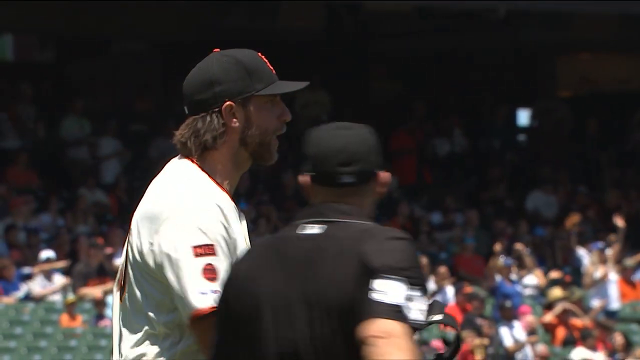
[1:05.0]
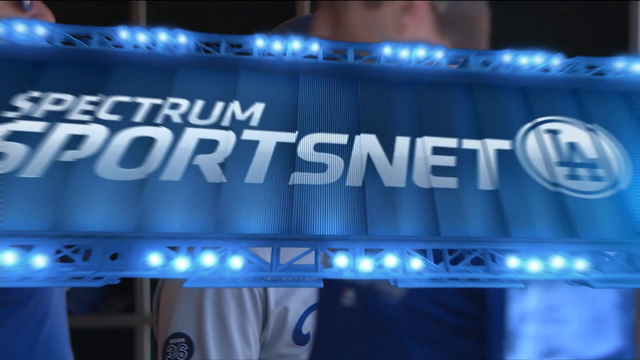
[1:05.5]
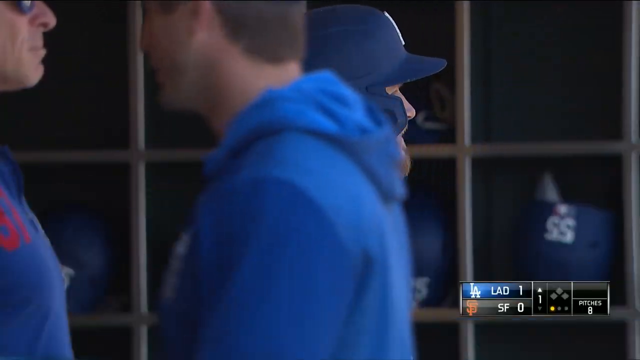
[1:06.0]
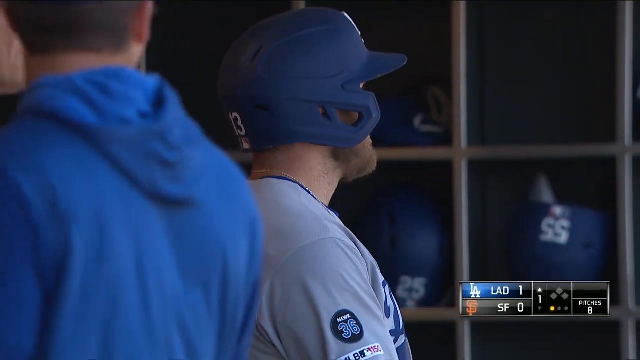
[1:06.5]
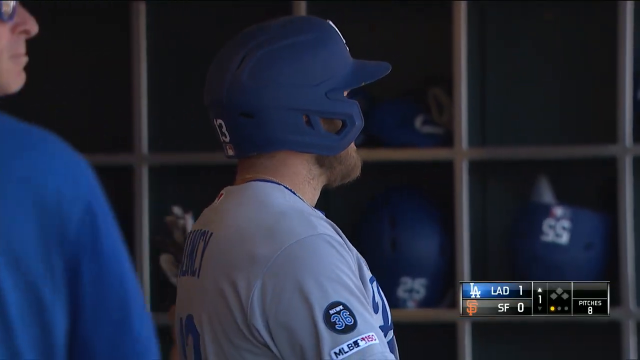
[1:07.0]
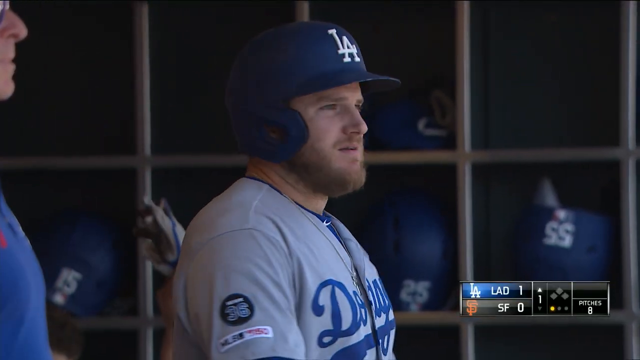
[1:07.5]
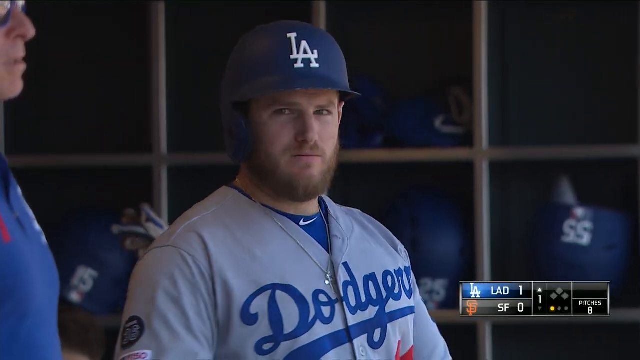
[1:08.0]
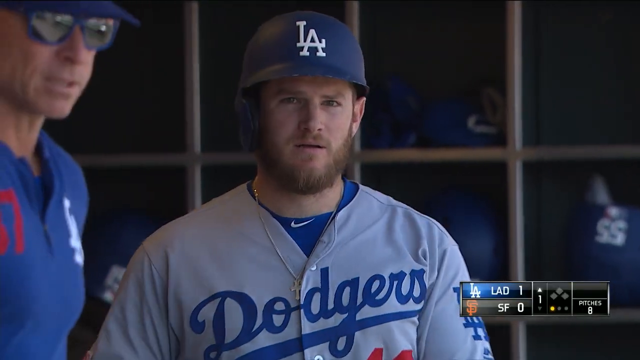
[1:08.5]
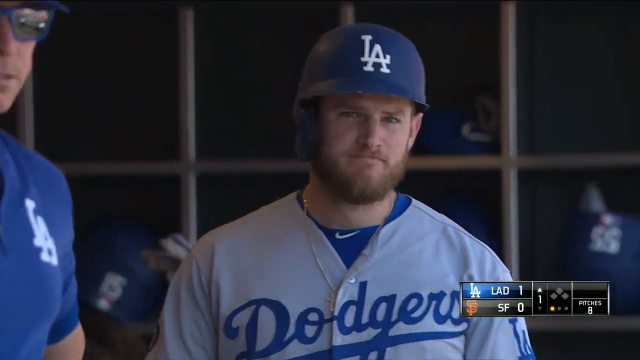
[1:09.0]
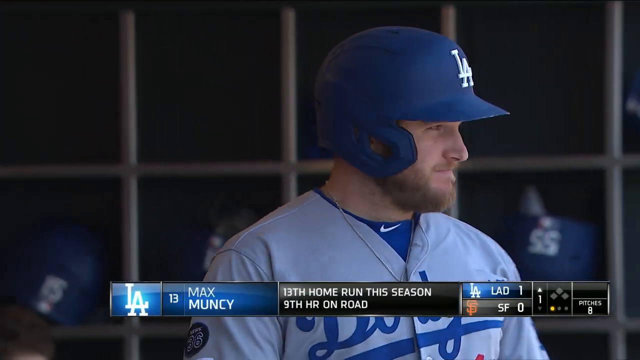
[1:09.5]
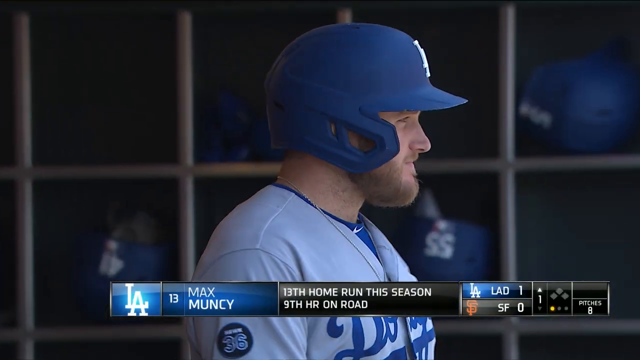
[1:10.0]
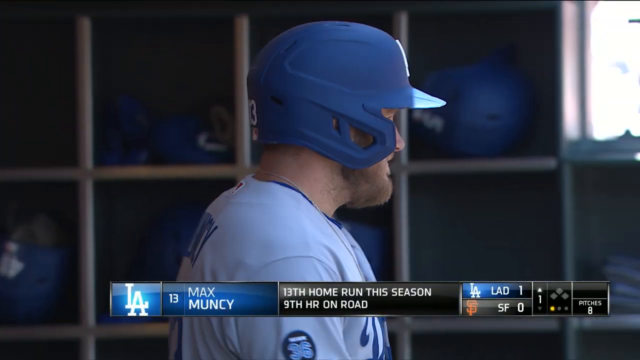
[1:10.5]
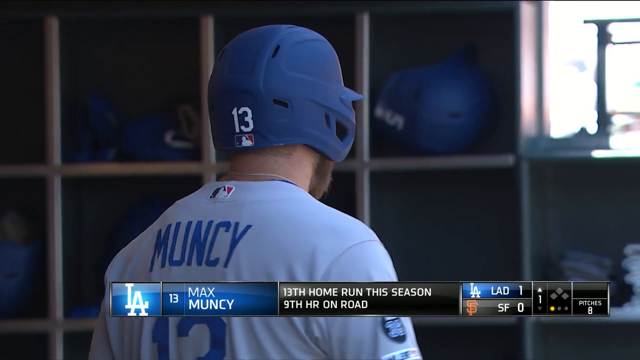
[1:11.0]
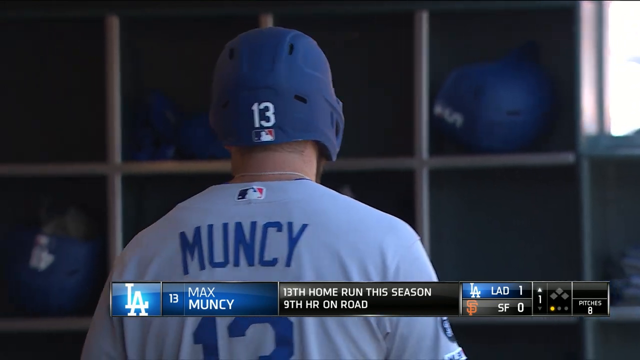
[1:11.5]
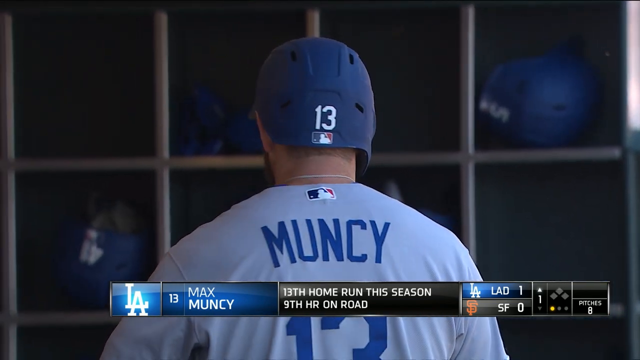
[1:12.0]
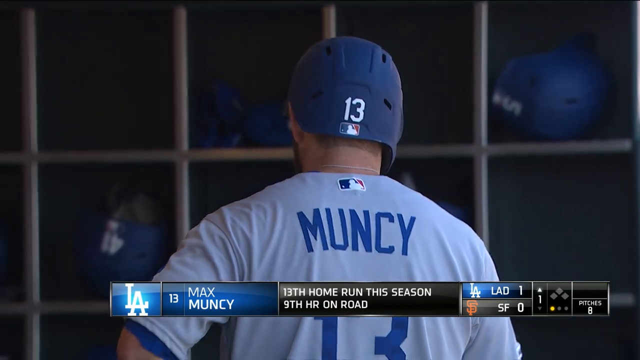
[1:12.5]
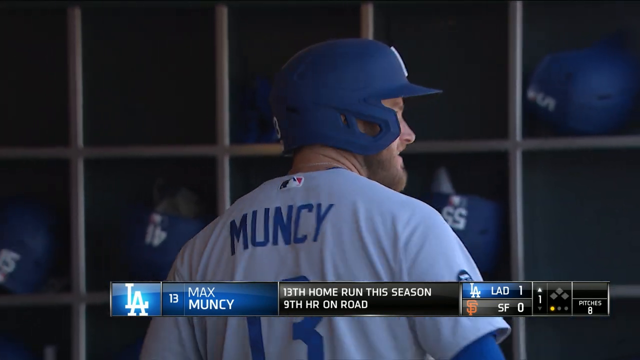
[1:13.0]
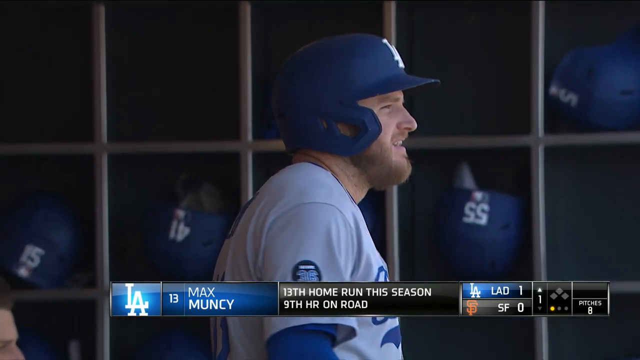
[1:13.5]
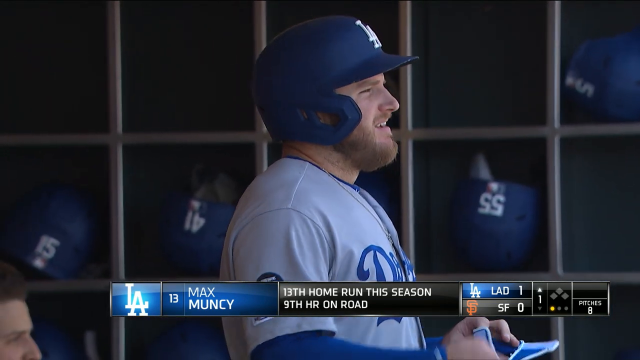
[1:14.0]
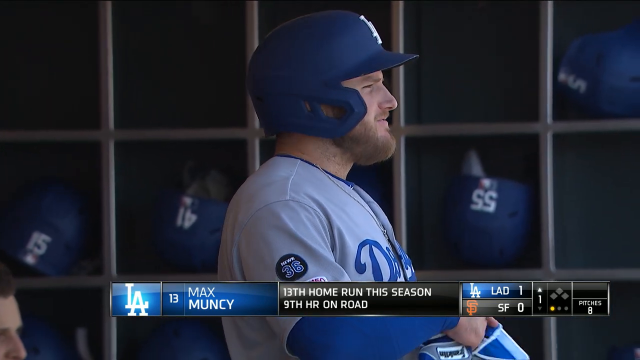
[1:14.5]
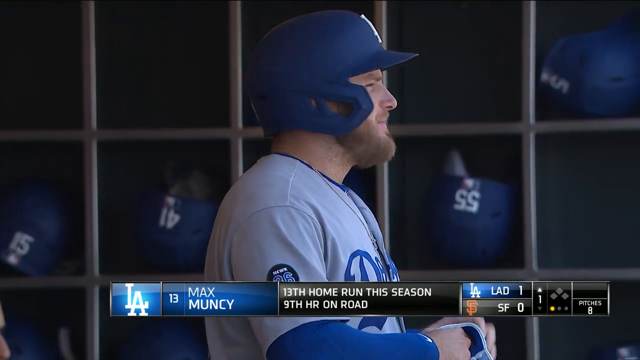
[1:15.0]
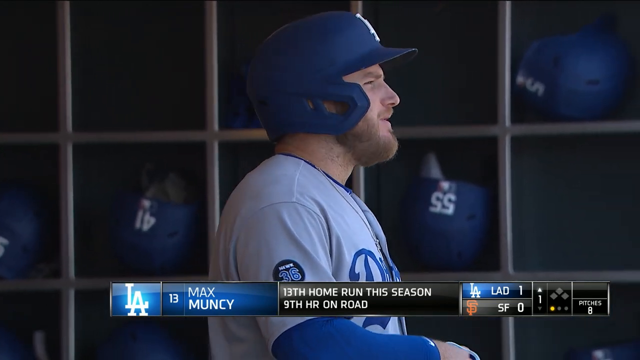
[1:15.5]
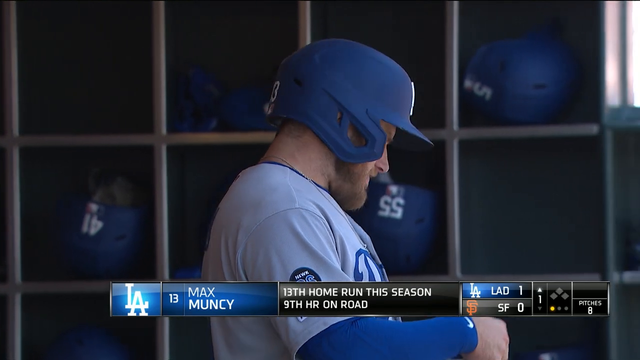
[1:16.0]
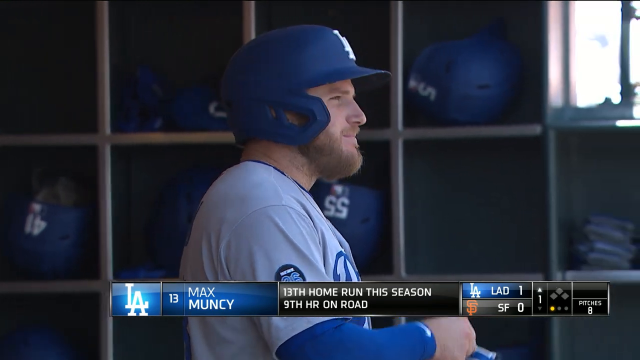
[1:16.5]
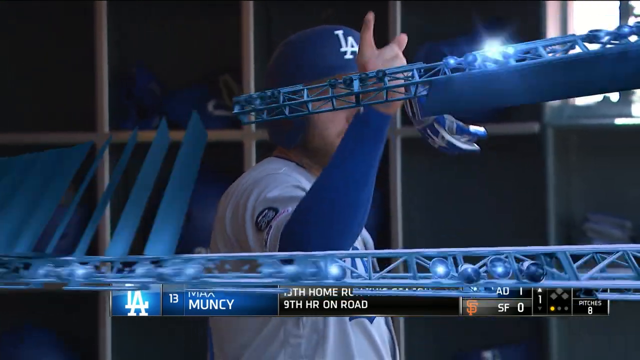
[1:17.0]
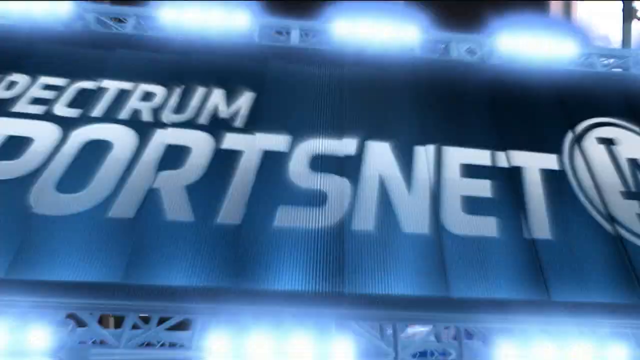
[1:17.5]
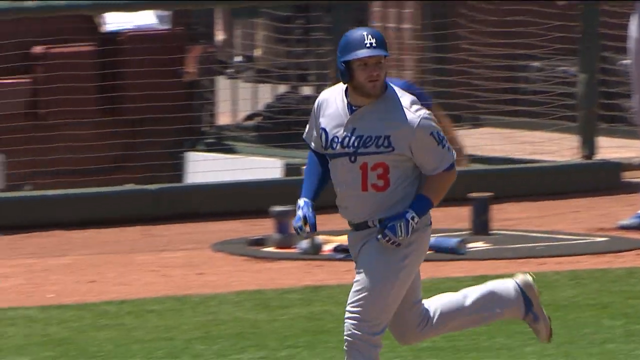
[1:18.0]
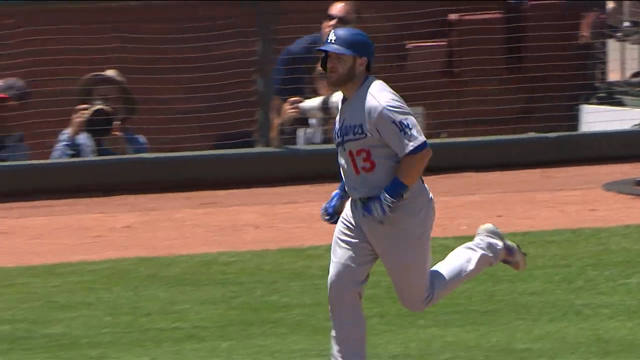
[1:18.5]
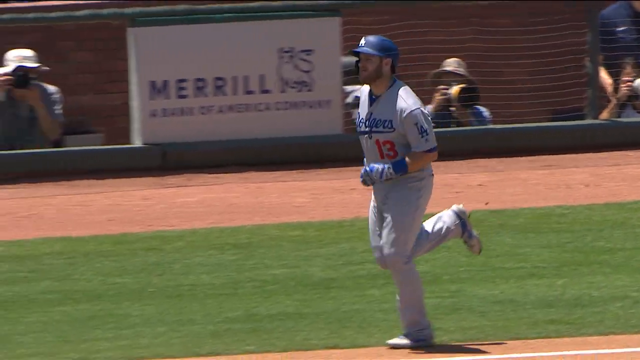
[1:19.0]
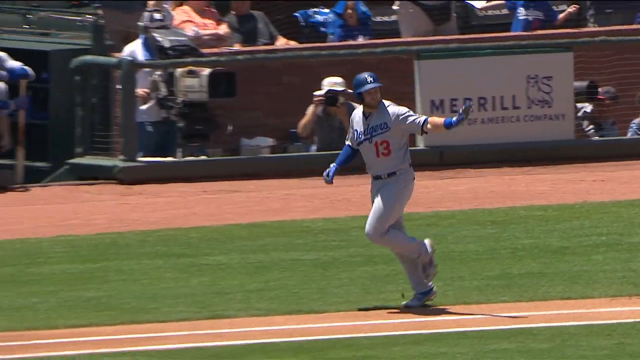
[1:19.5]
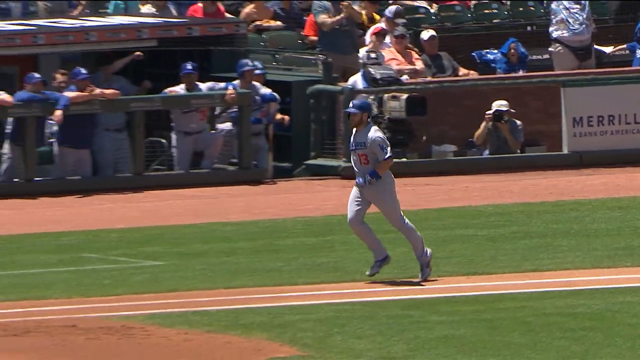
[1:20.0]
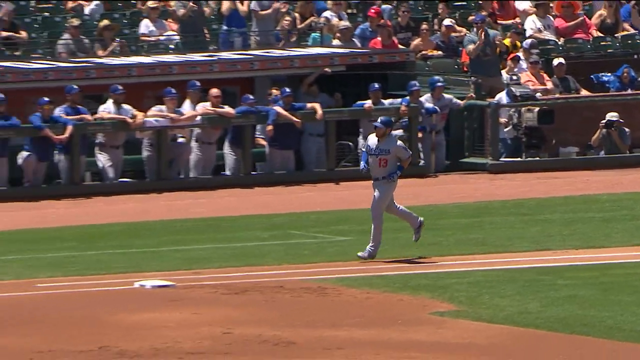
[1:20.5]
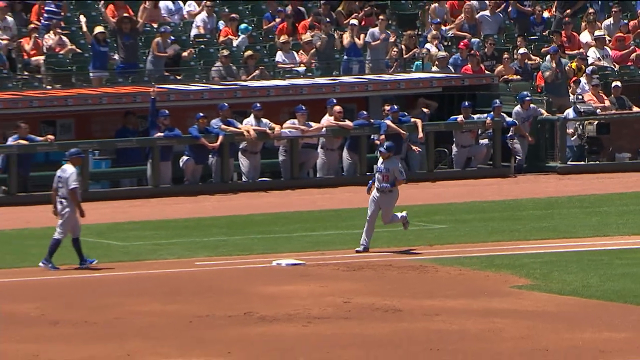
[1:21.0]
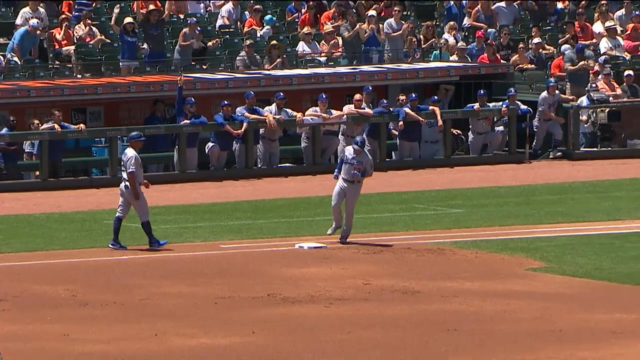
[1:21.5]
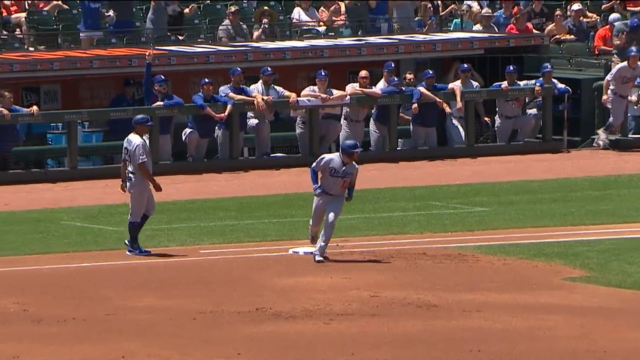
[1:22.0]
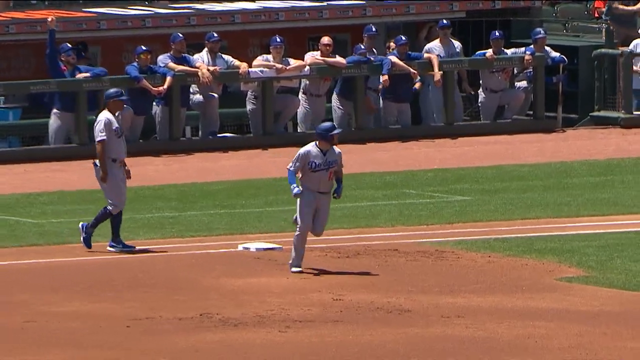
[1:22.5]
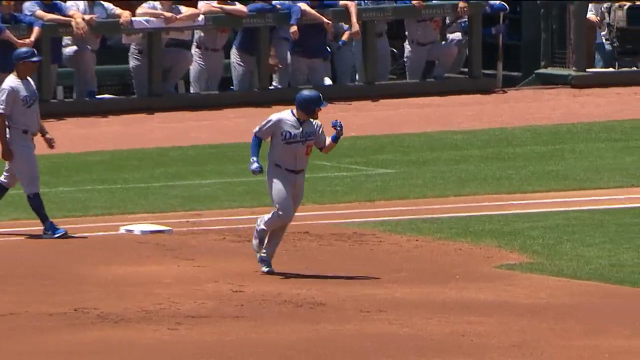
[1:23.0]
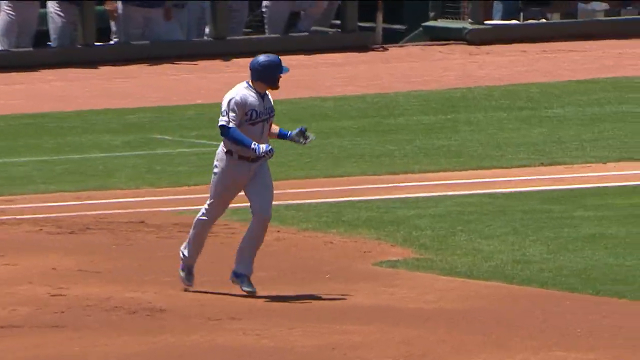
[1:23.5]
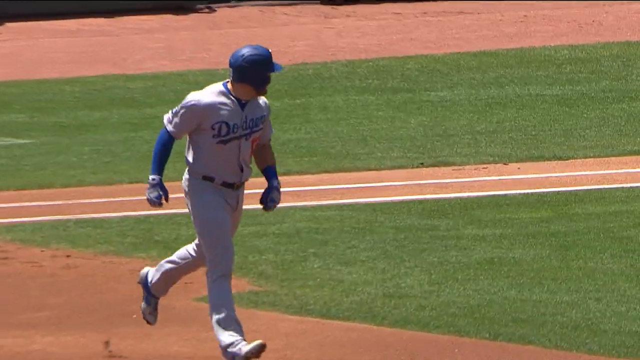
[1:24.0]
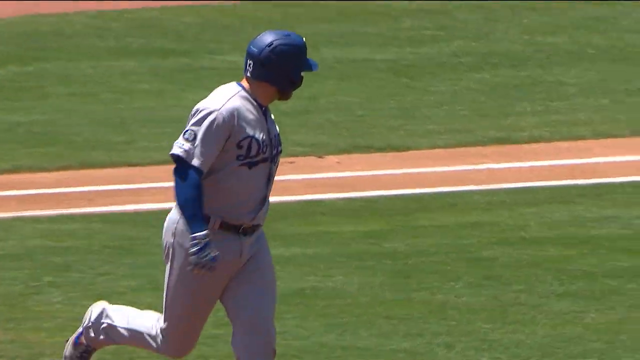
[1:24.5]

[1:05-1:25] Inside the Dodgers dugout, text reads "Max Muncy, 13th home run this season, 9th HR on road, home run on road." He is shown up close, then running around the bases on the field, kind of gesturing to people, and then the shot returns to him in the dugout. He still has the batter's helmet on, with 13 on the helmet and his jersey. He runs around the plates on red dirt and a very bright green field. In the wall there are holes where each team member's batting helmet is kept, and they all look the same: blue with white numbers and a white LA on the front. He looks kind of anxious, looking back and walking back and forth. A short shot shows the pitcher out on the field; both seem anxious about something, and the people on the field are kind of standing around as if waiting for something.